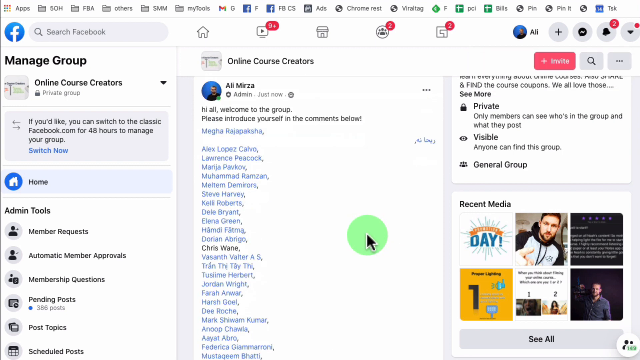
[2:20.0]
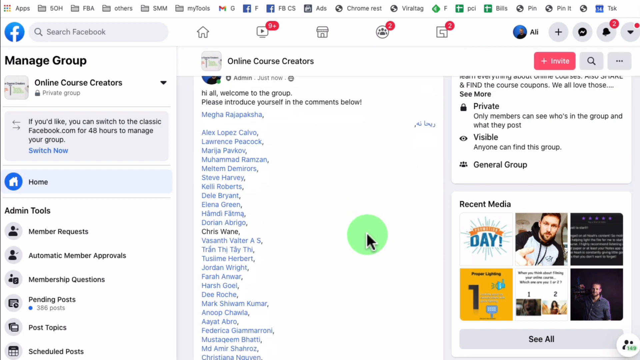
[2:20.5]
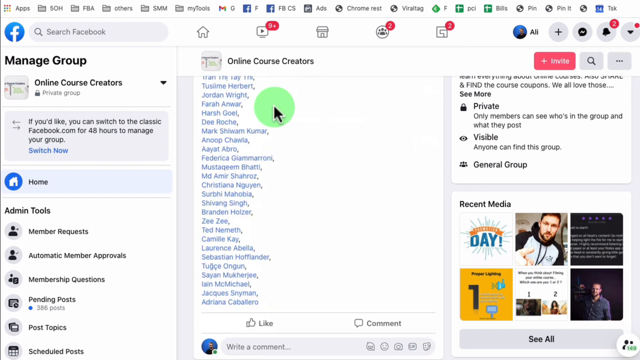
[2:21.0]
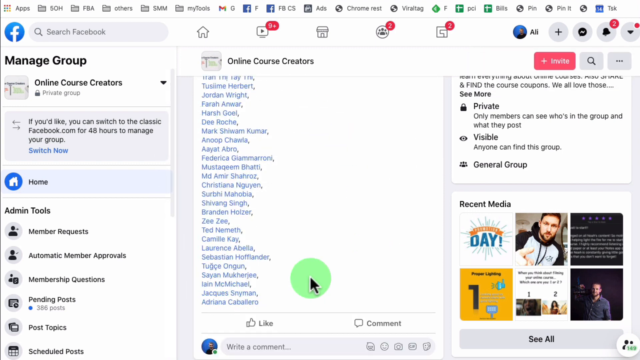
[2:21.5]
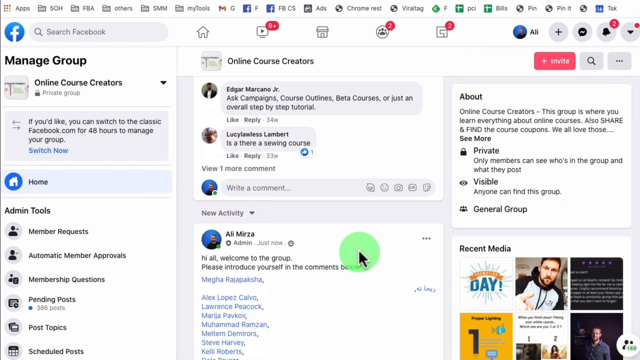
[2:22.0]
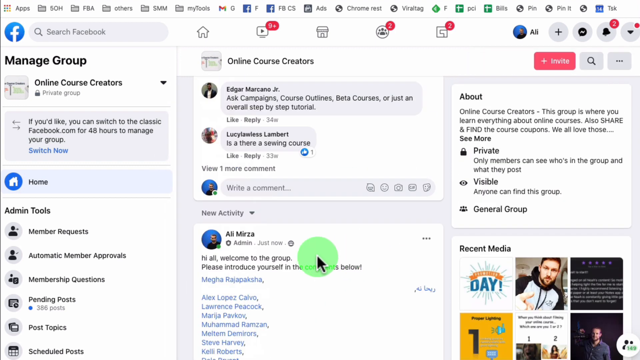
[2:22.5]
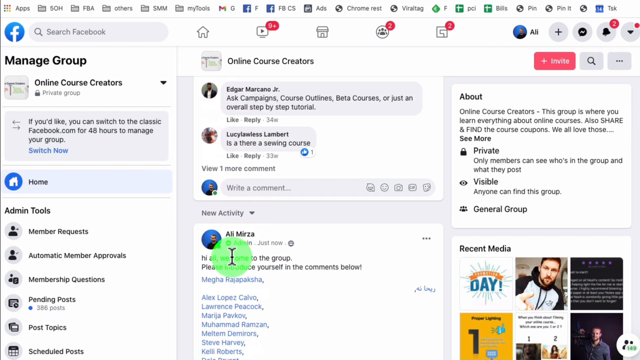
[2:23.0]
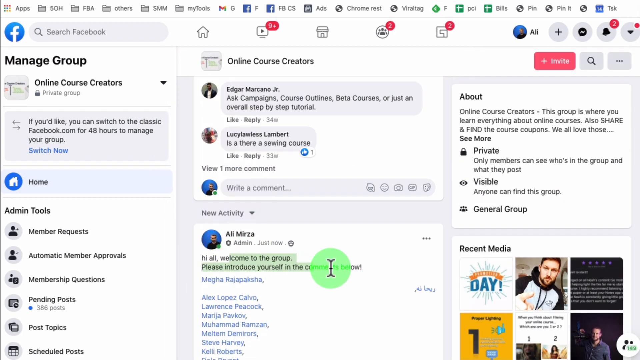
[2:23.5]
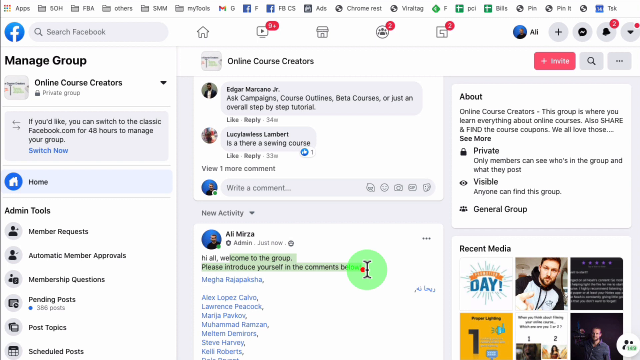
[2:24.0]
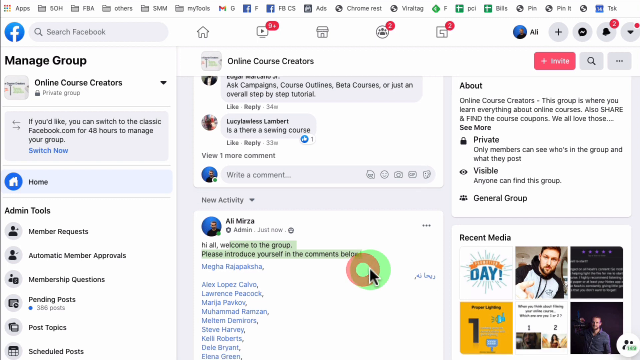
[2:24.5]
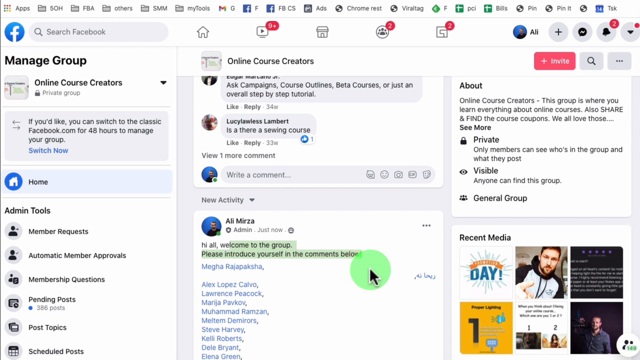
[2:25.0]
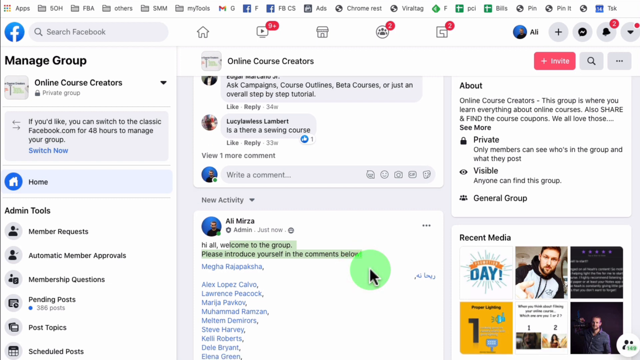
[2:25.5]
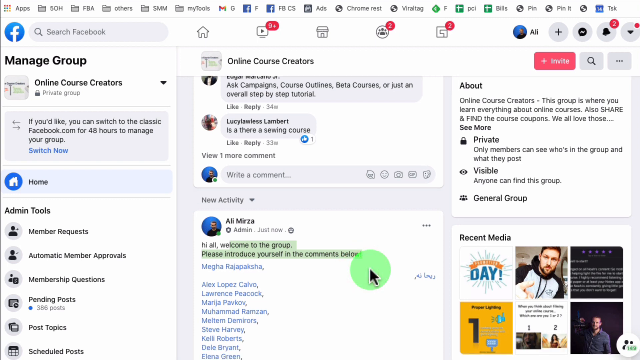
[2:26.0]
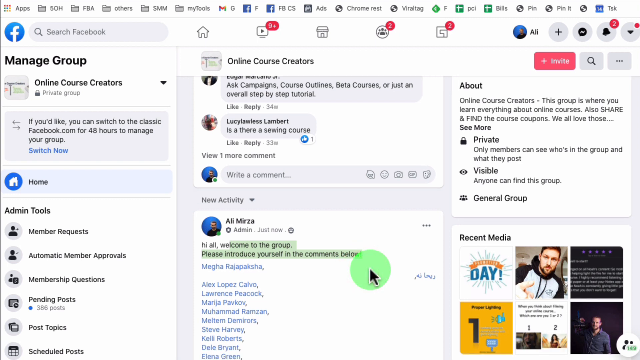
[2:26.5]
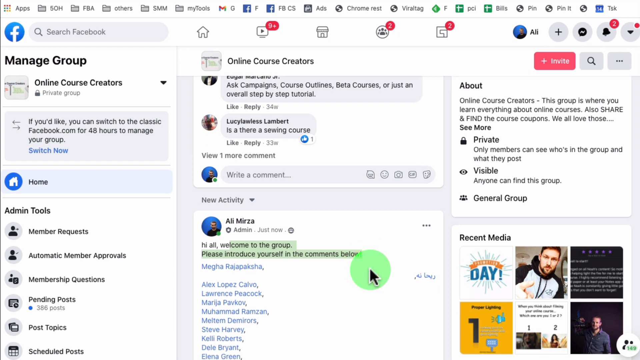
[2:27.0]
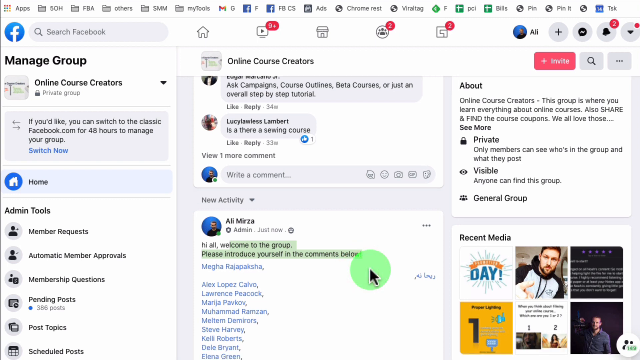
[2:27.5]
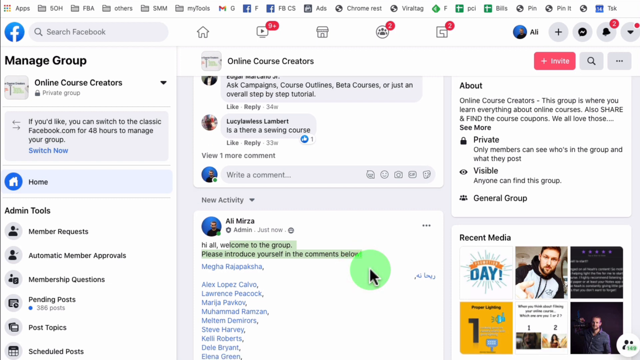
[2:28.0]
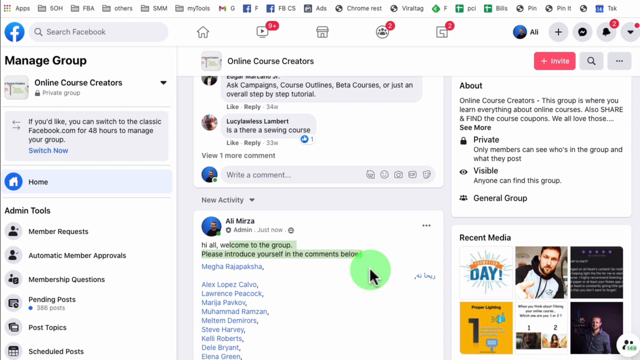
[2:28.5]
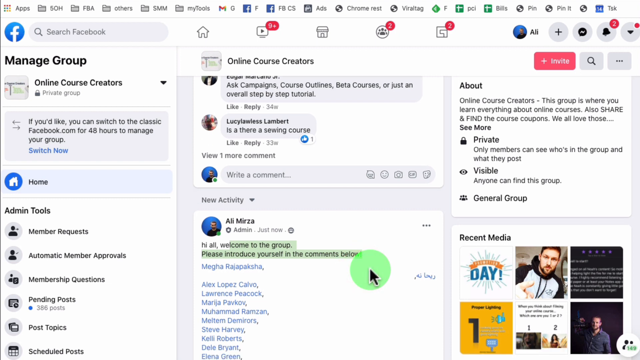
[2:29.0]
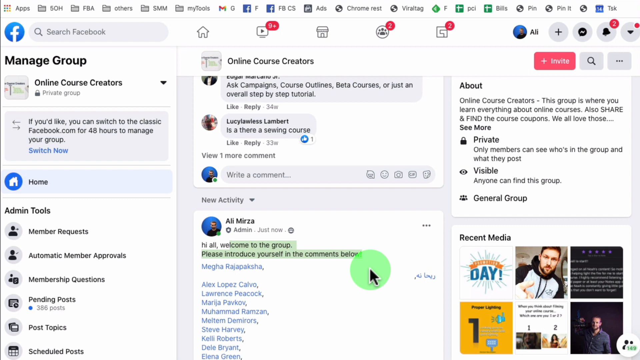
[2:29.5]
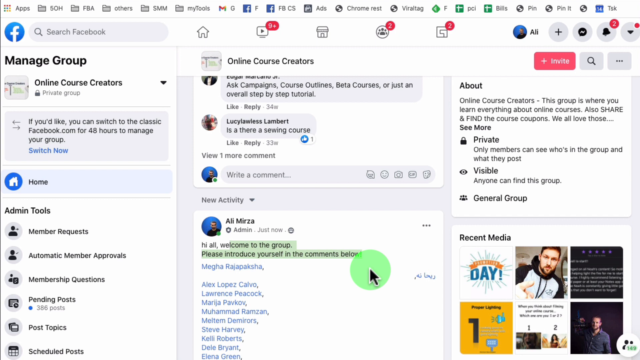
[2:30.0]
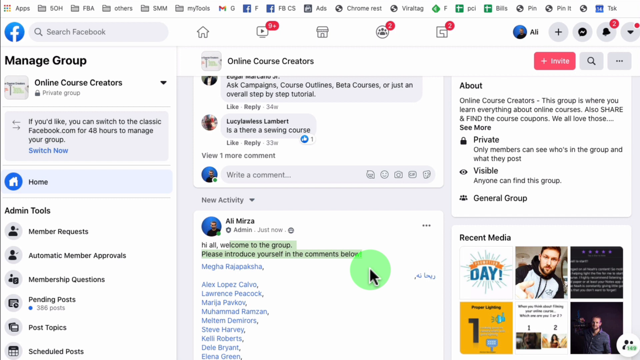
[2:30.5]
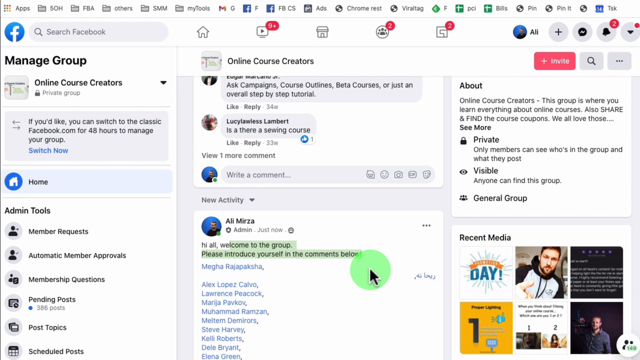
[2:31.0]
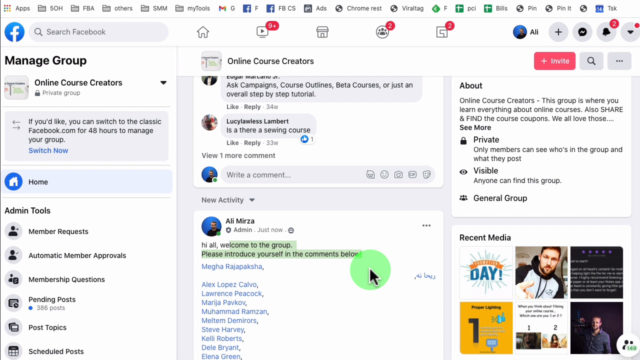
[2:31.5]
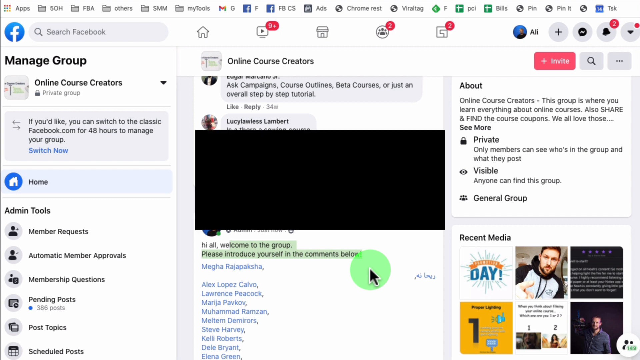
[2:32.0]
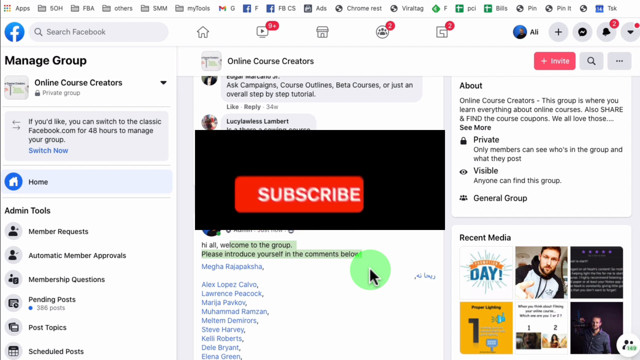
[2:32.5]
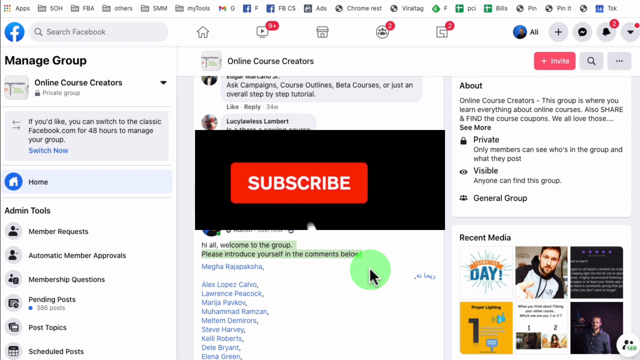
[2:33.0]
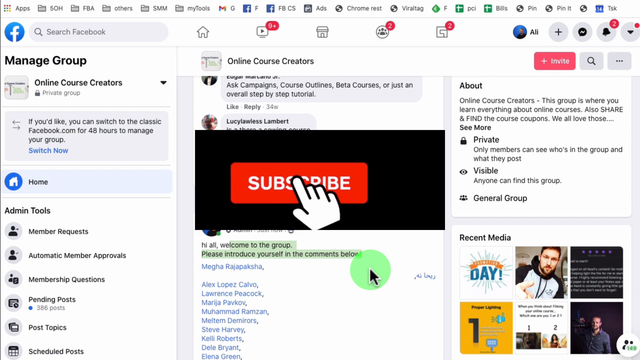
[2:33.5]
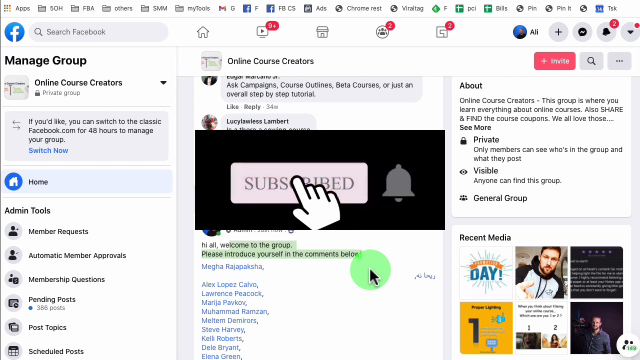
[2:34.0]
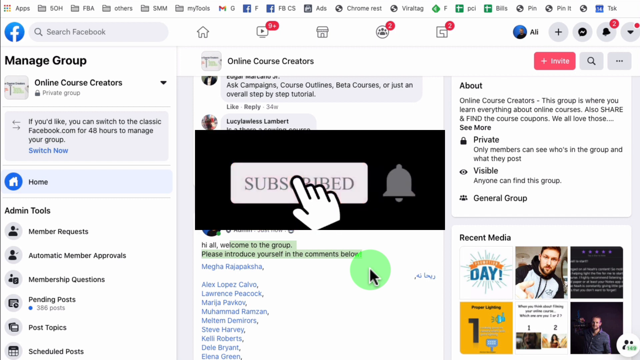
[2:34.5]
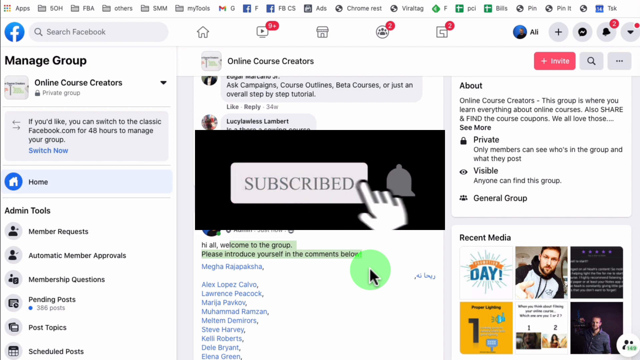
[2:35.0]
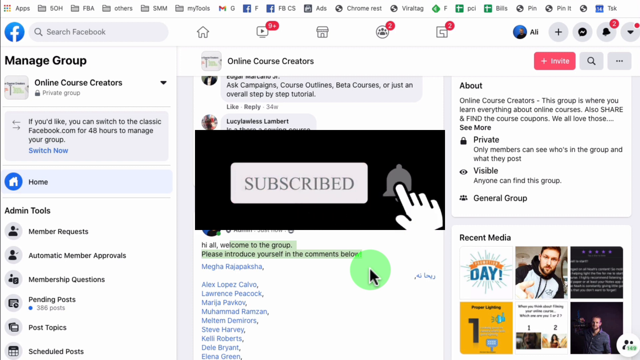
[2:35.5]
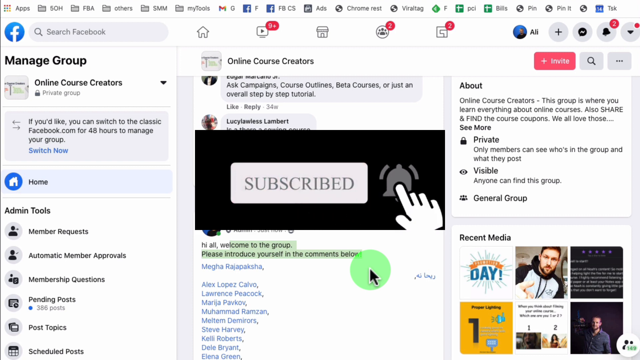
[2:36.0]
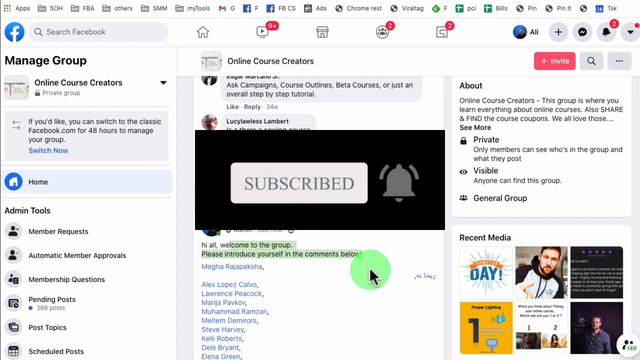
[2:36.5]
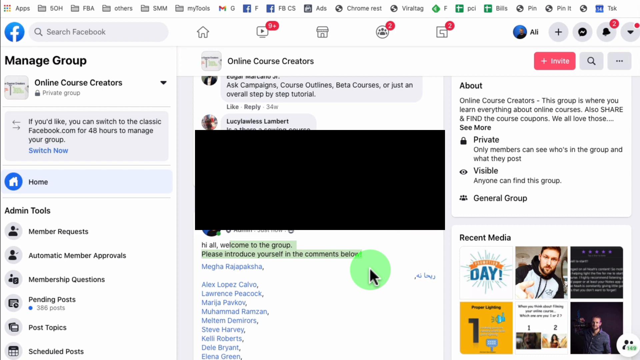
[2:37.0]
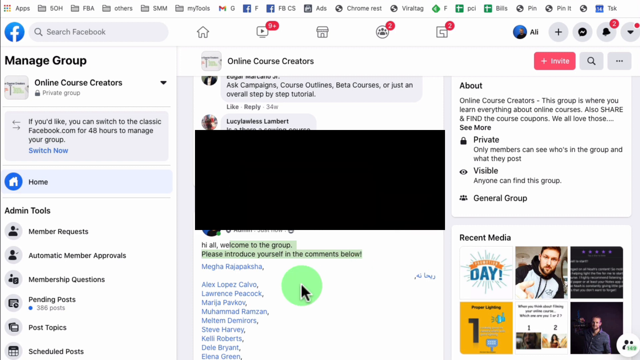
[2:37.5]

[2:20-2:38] Messages have been sent to the new members. On the right there is a profile picture of a guy wearing a black and white hoodie with strings. Next to him is recent media labeled "Day", and beneath it another item labeled "One". Posts that have already been made on the online course creators page appear on both sides.